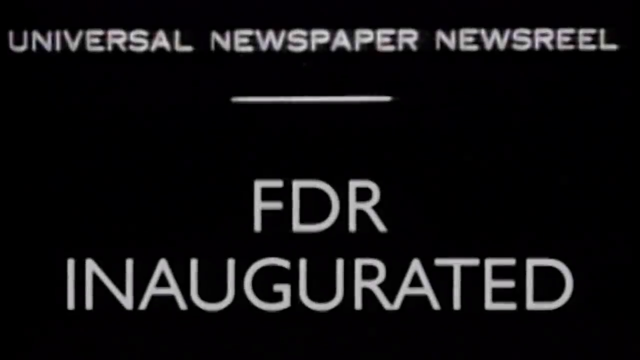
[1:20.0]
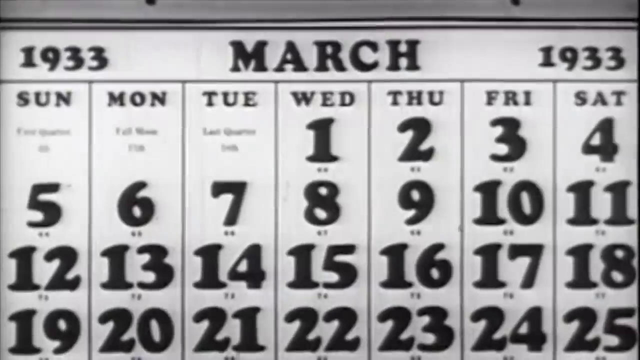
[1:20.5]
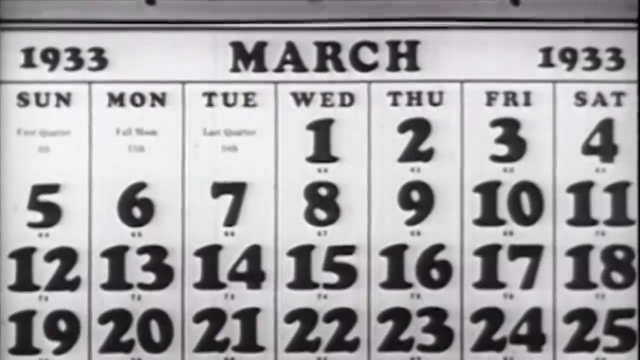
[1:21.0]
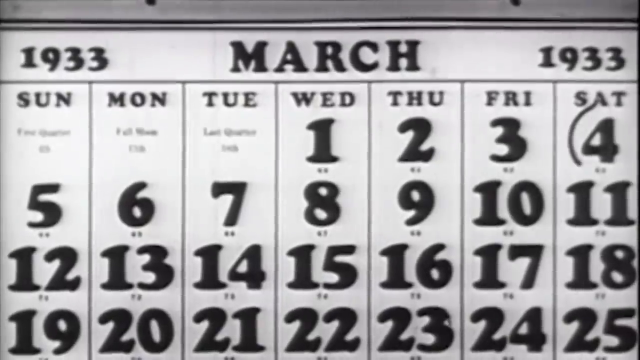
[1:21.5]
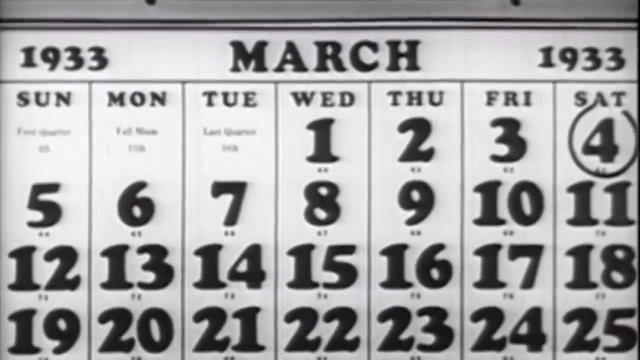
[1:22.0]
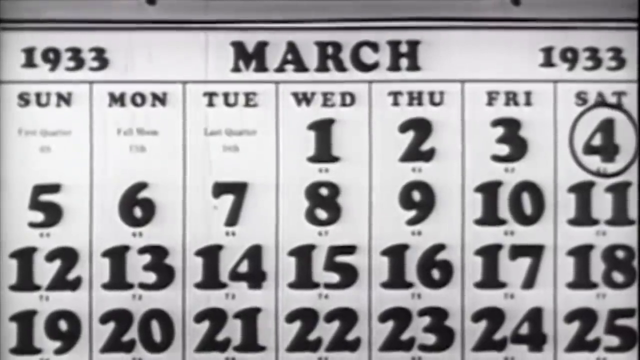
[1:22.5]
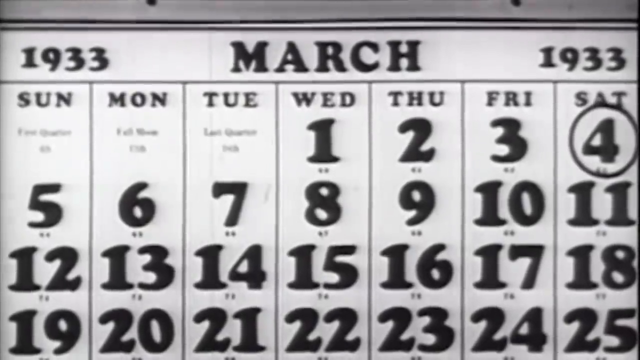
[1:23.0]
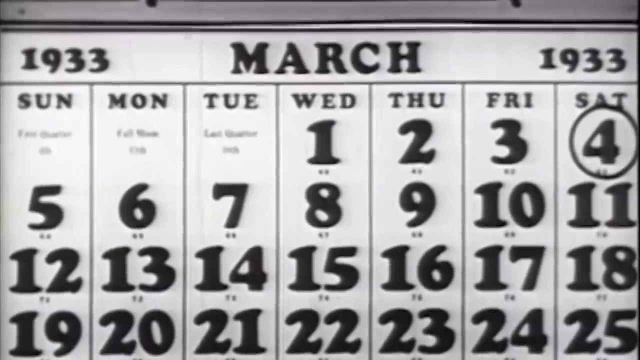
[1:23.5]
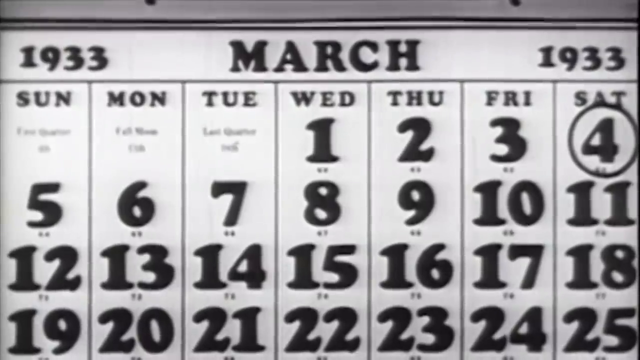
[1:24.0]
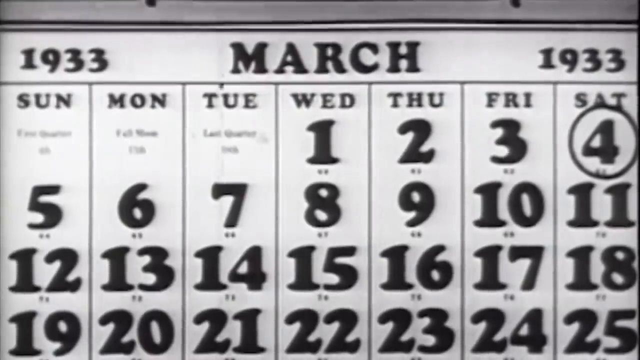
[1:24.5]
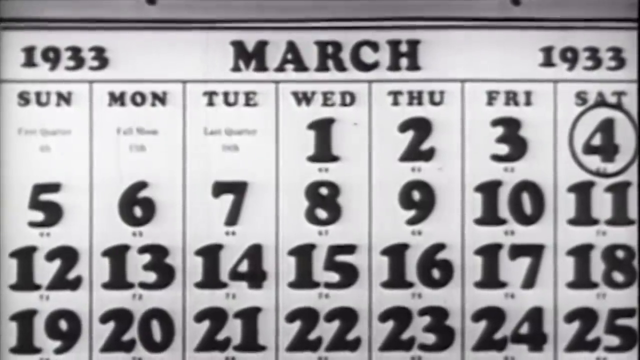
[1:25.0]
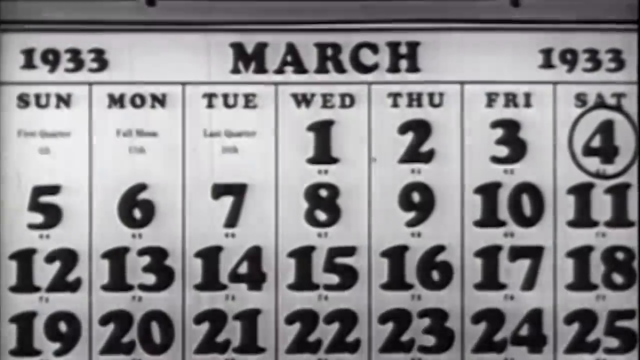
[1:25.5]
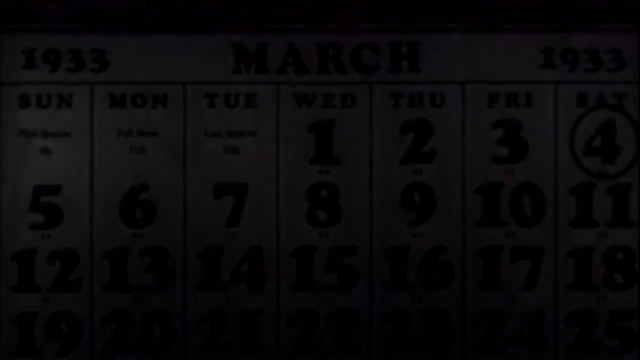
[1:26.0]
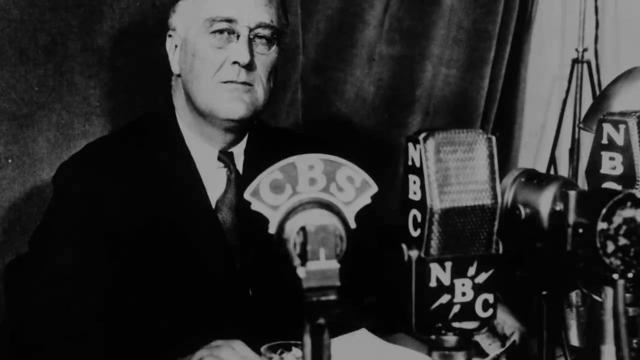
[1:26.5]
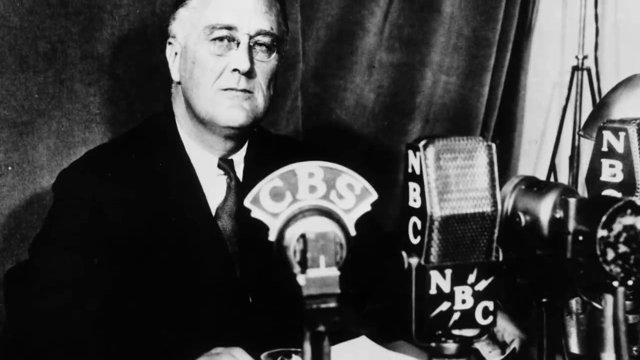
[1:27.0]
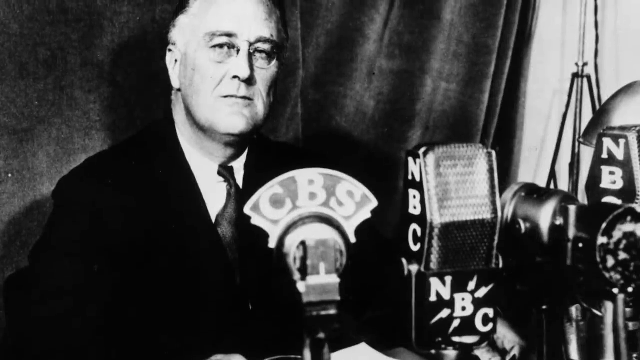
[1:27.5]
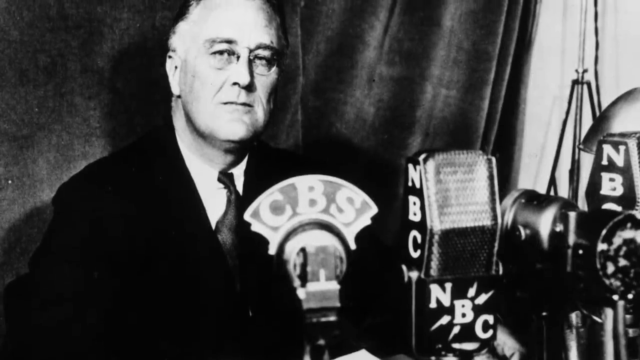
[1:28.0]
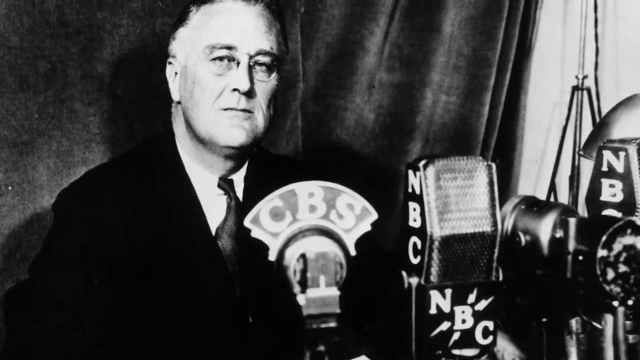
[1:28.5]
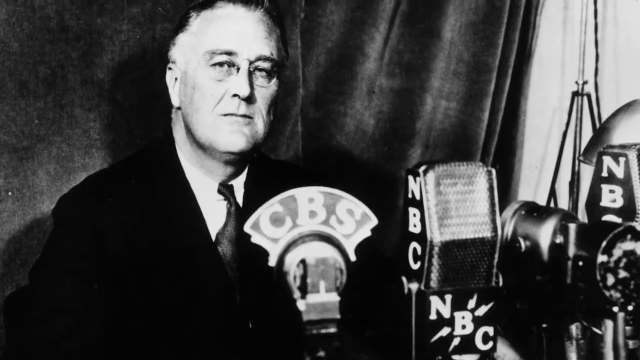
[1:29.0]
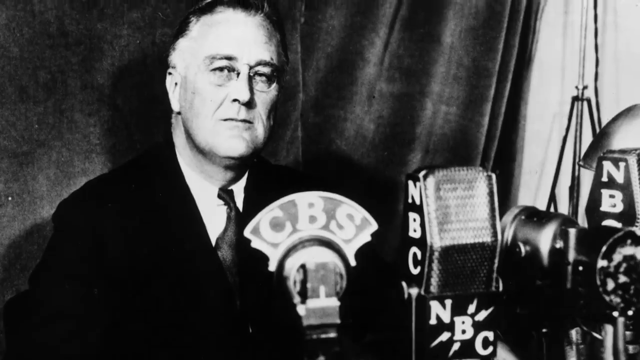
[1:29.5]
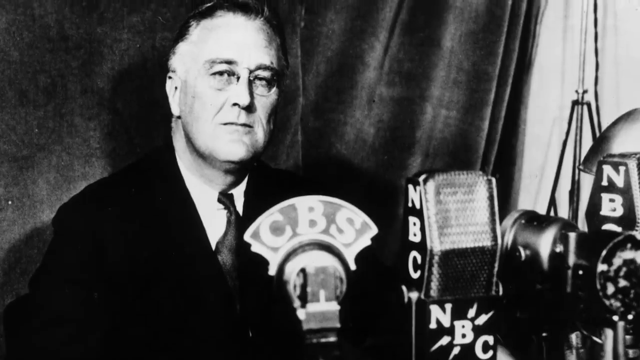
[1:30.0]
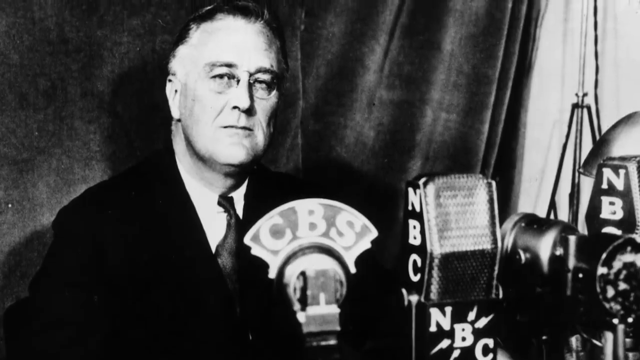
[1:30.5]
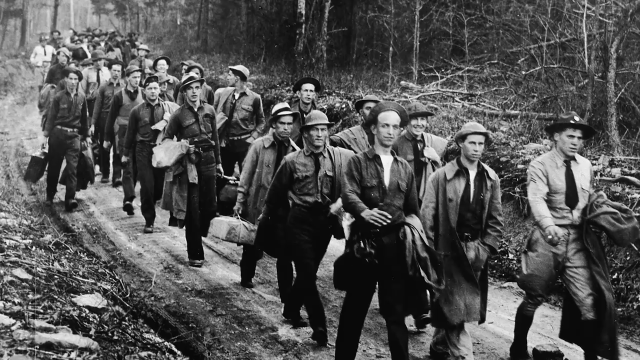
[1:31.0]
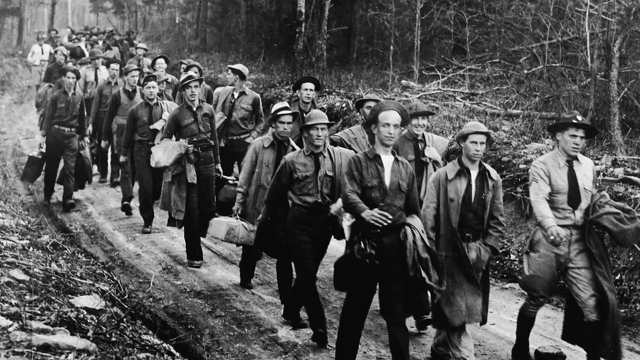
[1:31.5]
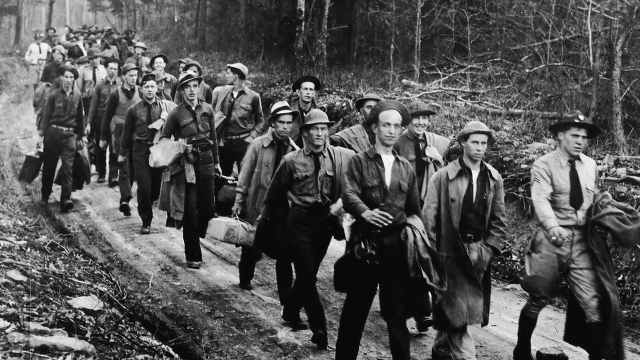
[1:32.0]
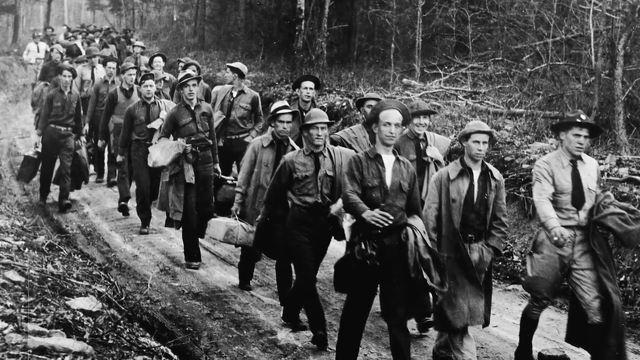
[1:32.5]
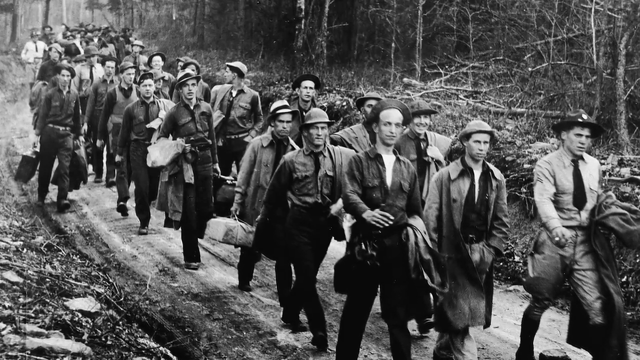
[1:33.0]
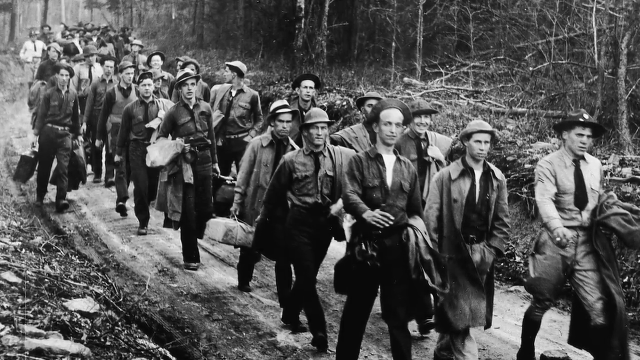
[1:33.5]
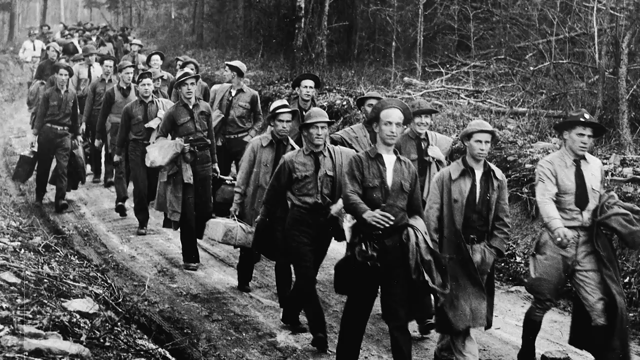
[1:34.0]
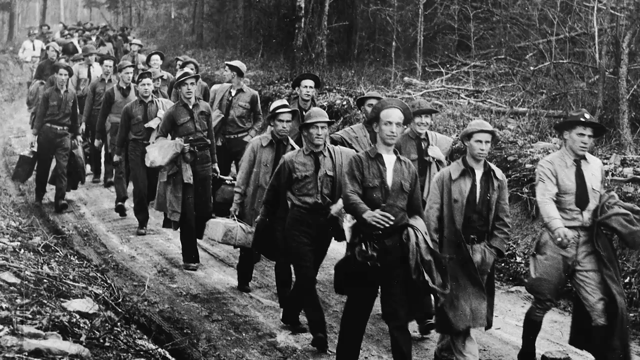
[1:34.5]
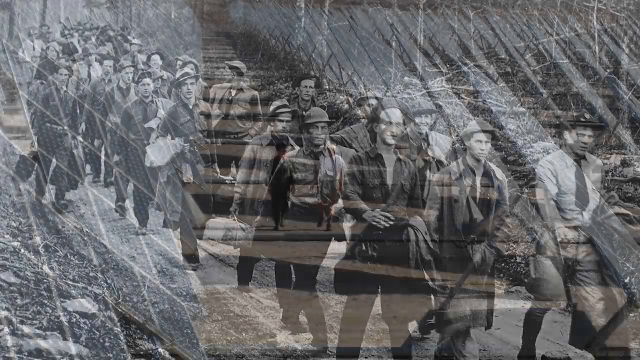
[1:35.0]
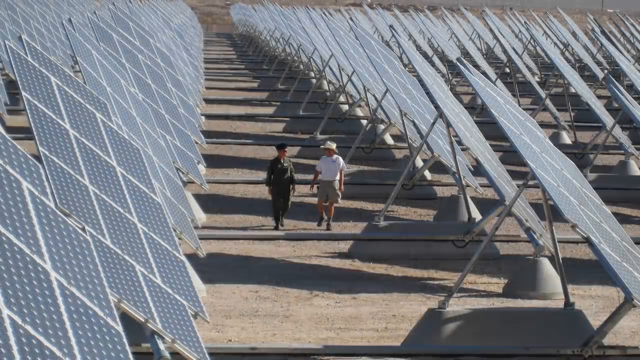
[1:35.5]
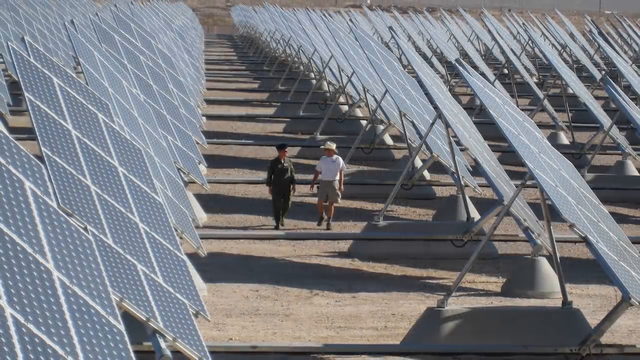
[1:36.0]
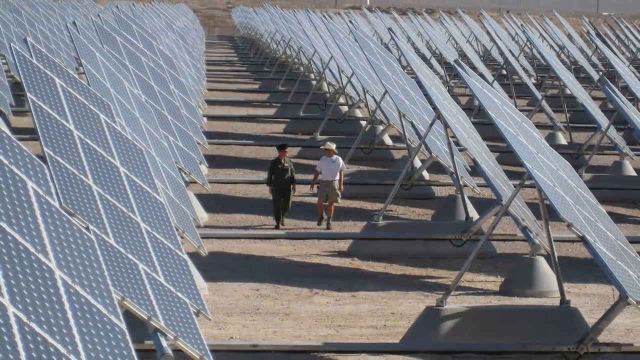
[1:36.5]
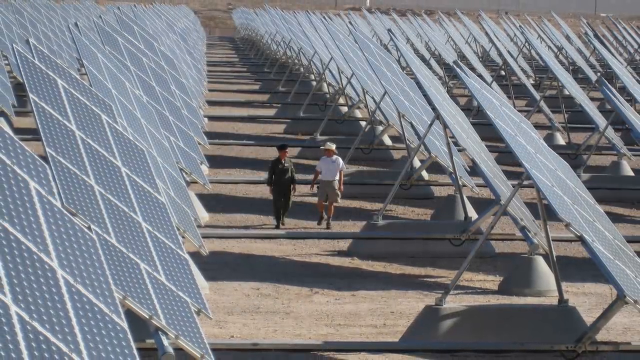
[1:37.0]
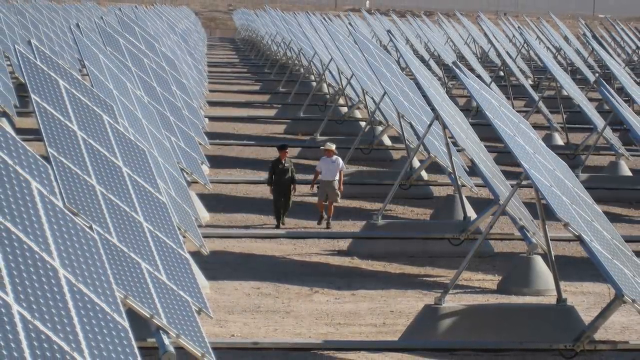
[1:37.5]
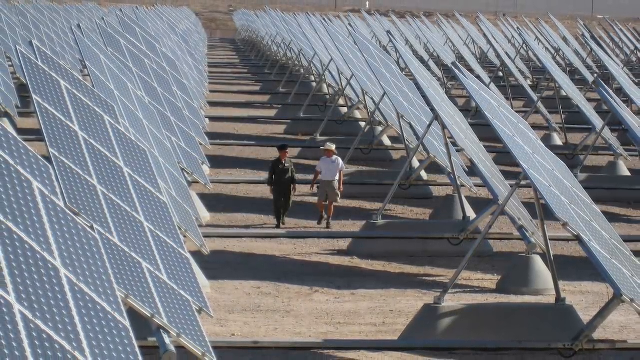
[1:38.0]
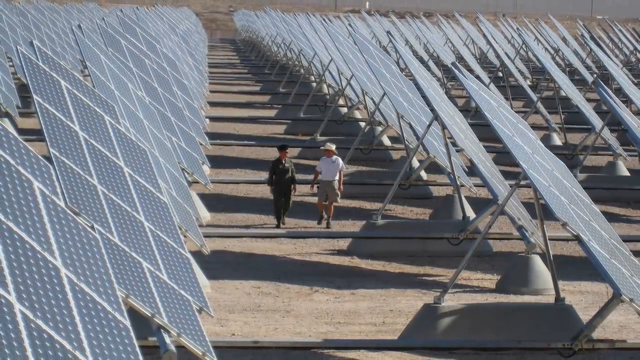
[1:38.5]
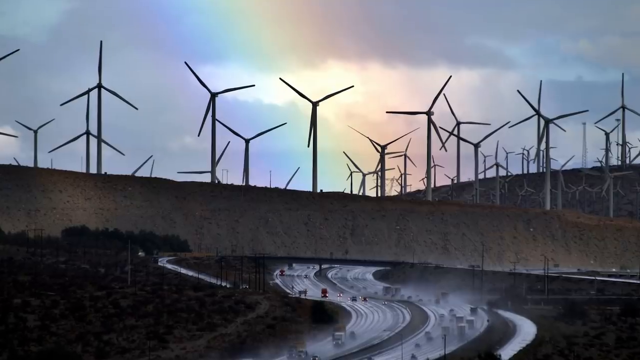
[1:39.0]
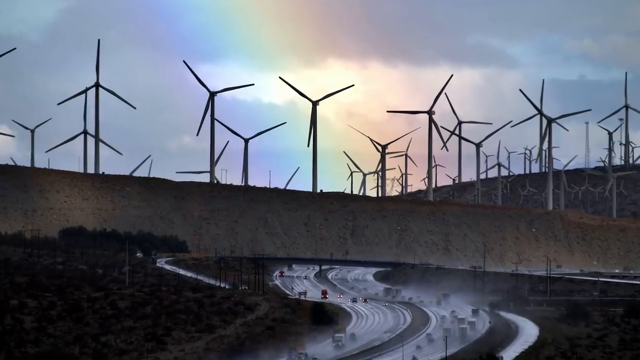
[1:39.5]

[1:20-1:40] On a black background, white lettering at the top begins "Universal", with a white line below it and, below that, text reading "FTR inaugurated". The next image shows a calendar: under a black line at the top, black text reads "1933" and "March 1933" from left to right. The next line has the days of the week, spaced out by black lines. Under Wednesday, the numbers 1, 2, 3, 4 run from left to right; the next row reads 5 to 11, the next 12 to 17, and the next 19 to 25. A black line circles the four, for Saturday. Next, a man in a black suit, white collared shirt and black tie, with round glasses and a white complexion, has microphones in front of him and a black curtain behind him. One microphone reads "CBS" in white lettering, and the next one to the right, more square, reads "NBC". Another black and white photo shows a group of white men in gray coats walking on a brown dirt path, with brown trees in the background. The next image shows two people walking among solar panels that are white-outlined, gray and black, with white dots in the middle. The ground seems to be gray. The person on the right wears a white t-shirt, a white hat and gray shorts; the person on the left seems to be wearing a black outfit. The sun shines on the right side, casting a shadow.